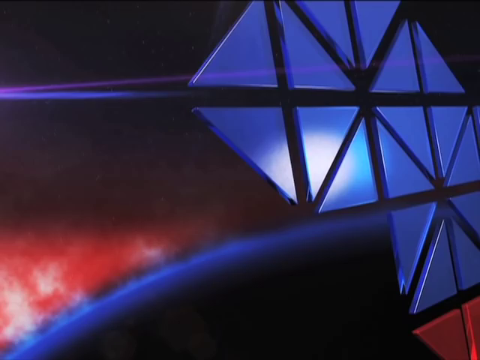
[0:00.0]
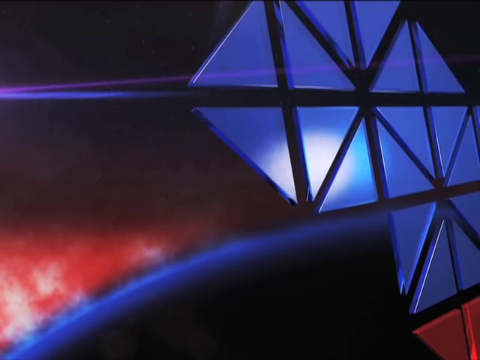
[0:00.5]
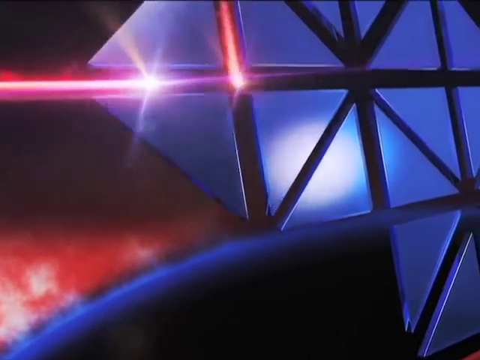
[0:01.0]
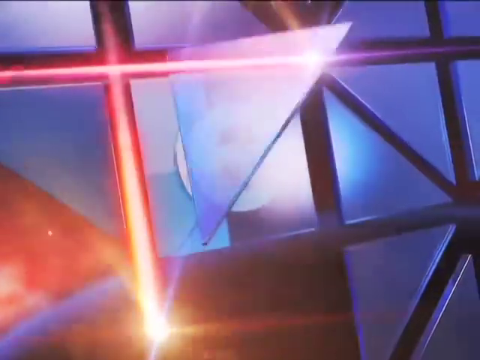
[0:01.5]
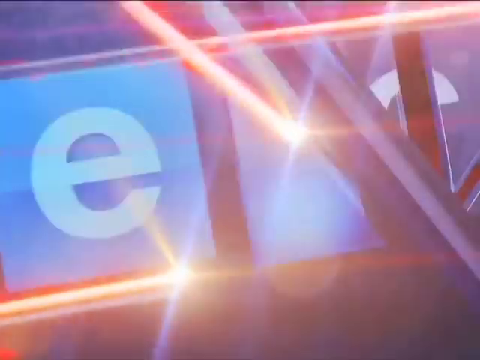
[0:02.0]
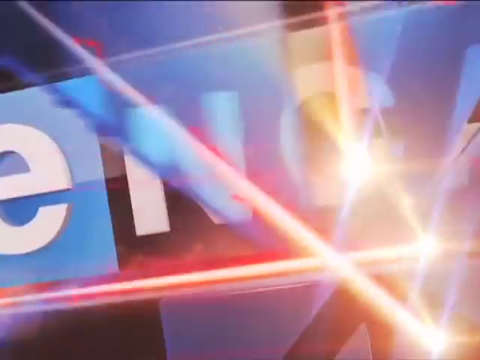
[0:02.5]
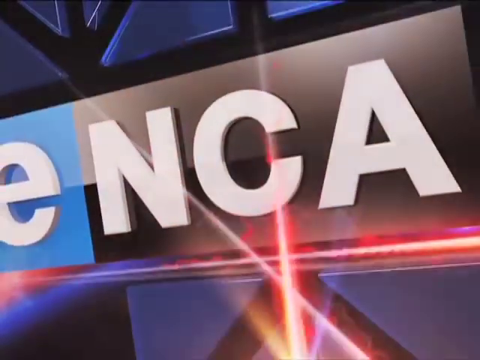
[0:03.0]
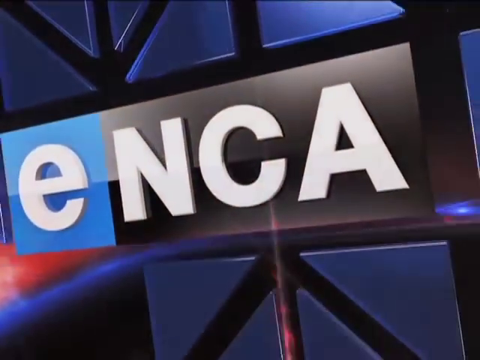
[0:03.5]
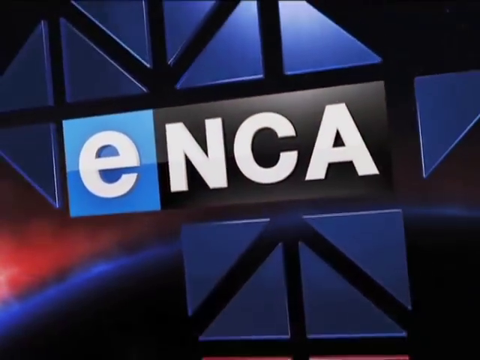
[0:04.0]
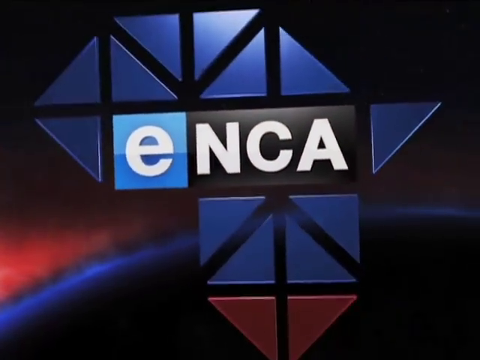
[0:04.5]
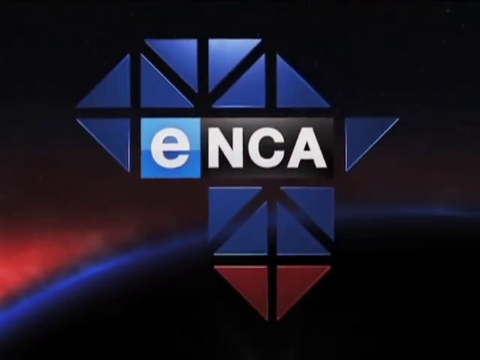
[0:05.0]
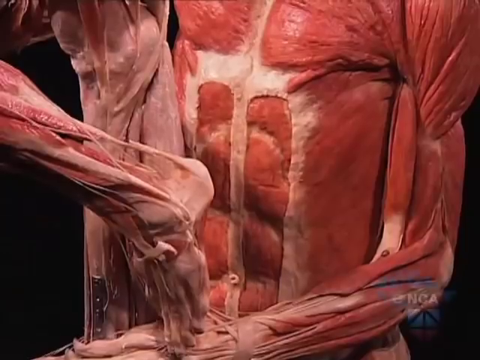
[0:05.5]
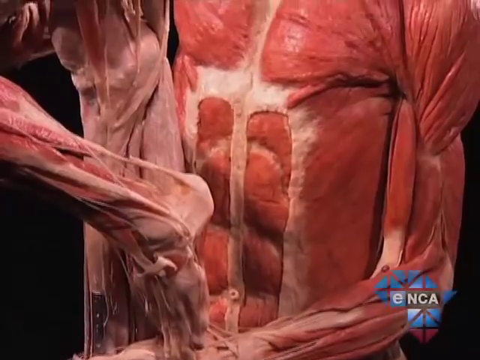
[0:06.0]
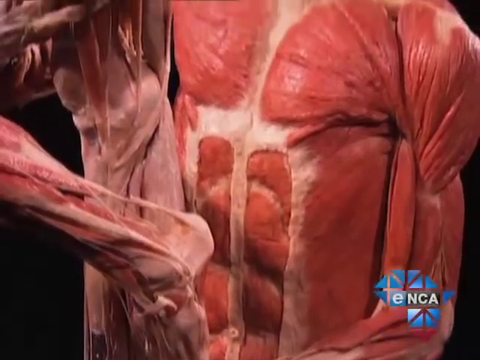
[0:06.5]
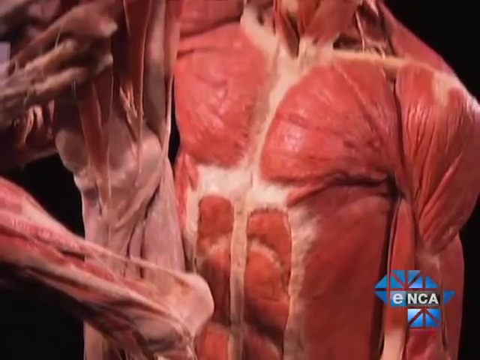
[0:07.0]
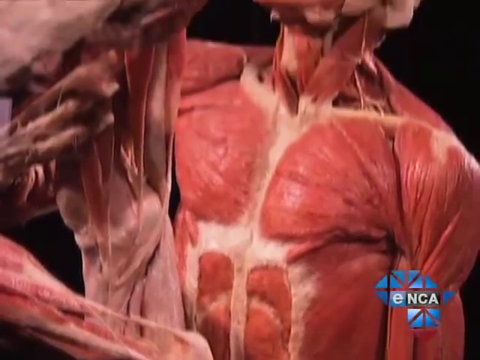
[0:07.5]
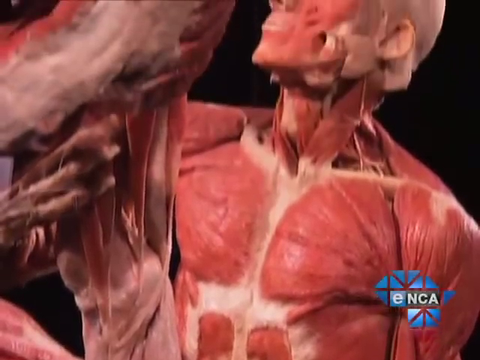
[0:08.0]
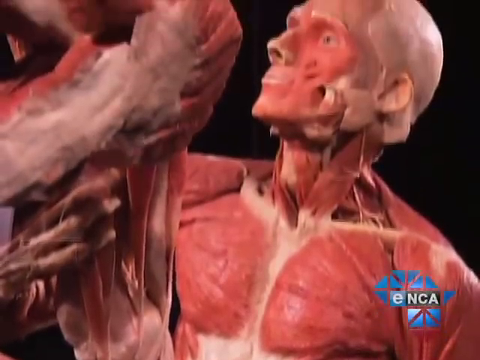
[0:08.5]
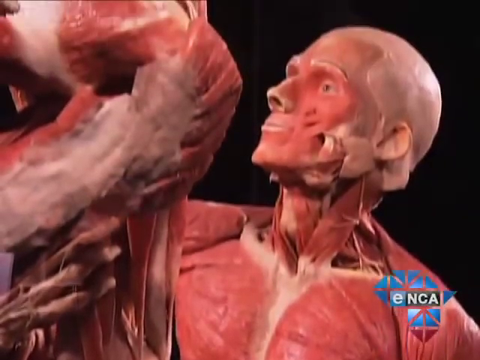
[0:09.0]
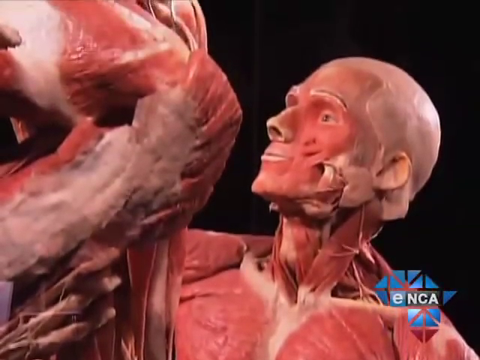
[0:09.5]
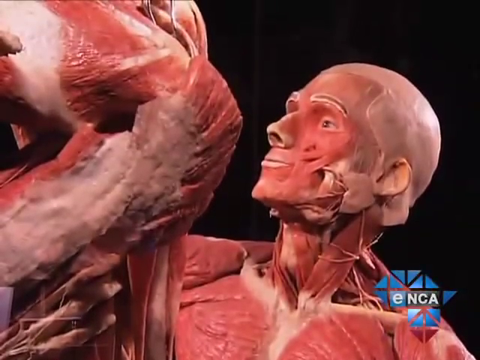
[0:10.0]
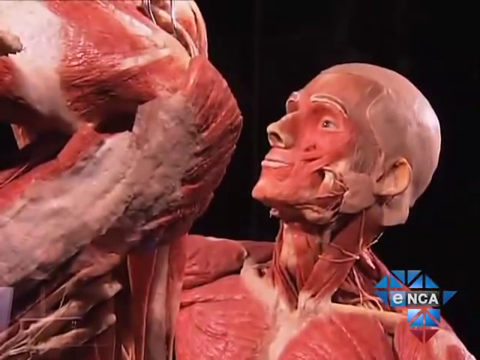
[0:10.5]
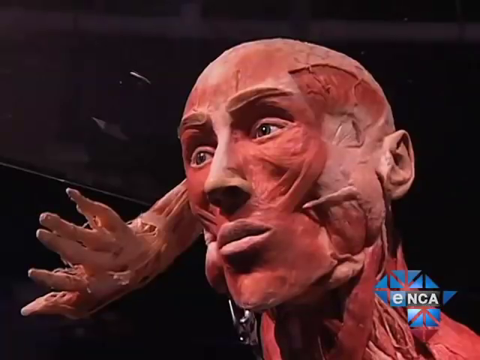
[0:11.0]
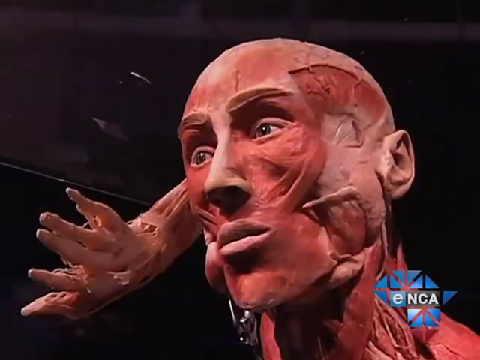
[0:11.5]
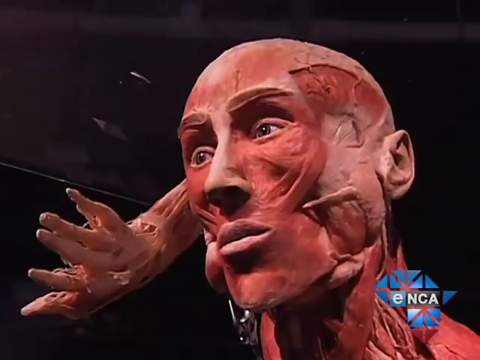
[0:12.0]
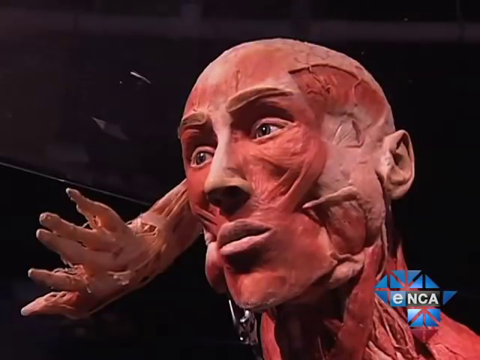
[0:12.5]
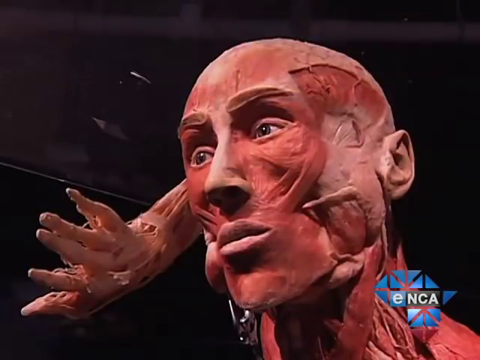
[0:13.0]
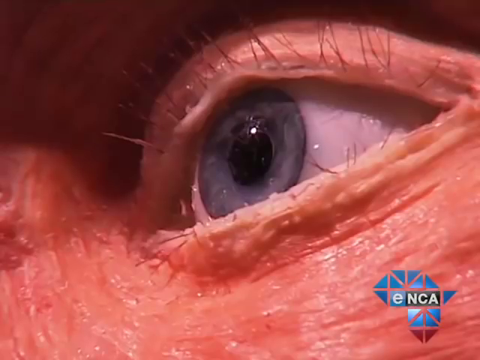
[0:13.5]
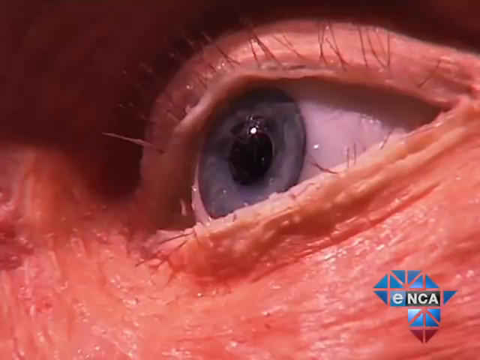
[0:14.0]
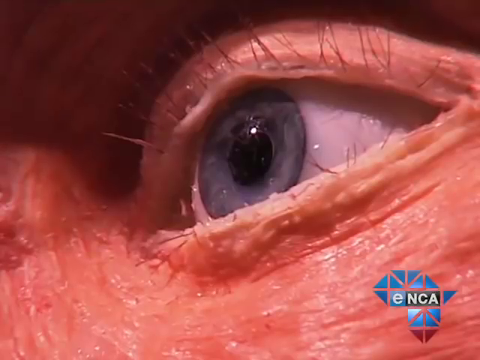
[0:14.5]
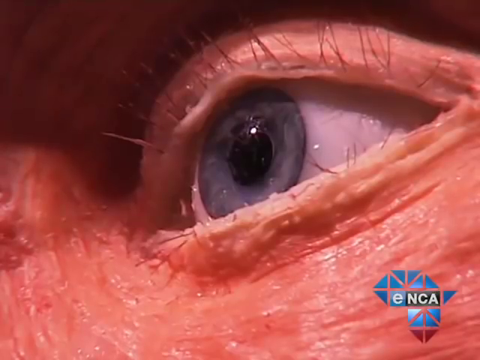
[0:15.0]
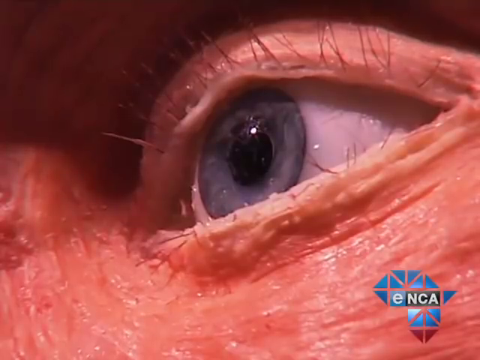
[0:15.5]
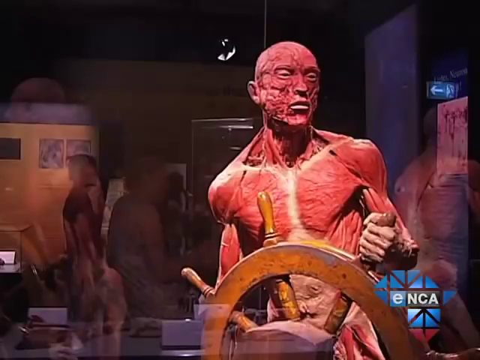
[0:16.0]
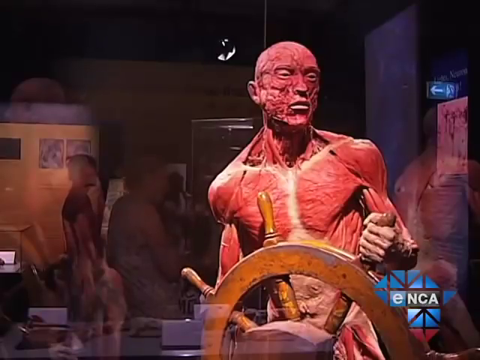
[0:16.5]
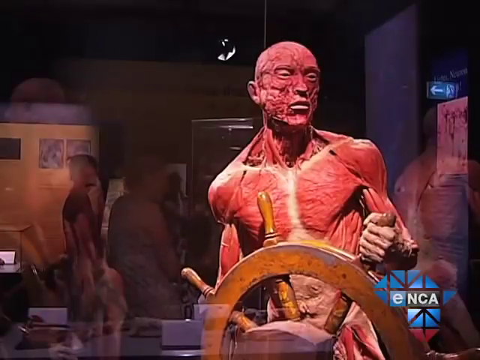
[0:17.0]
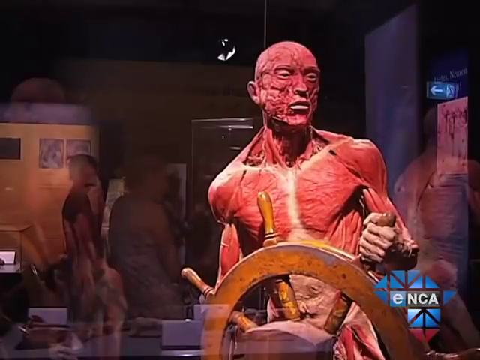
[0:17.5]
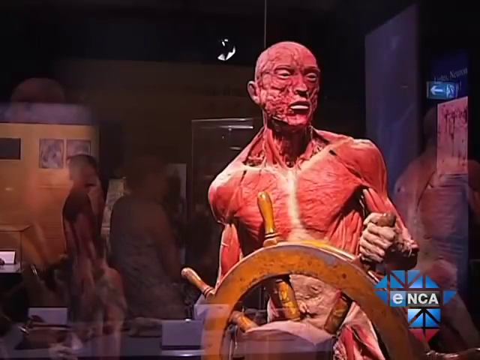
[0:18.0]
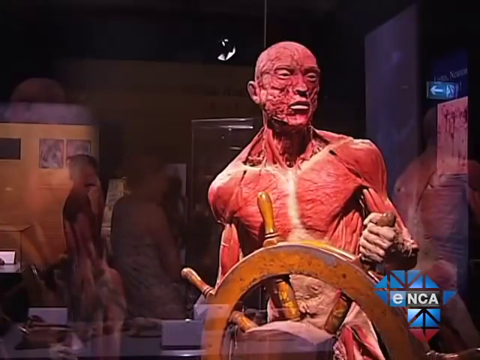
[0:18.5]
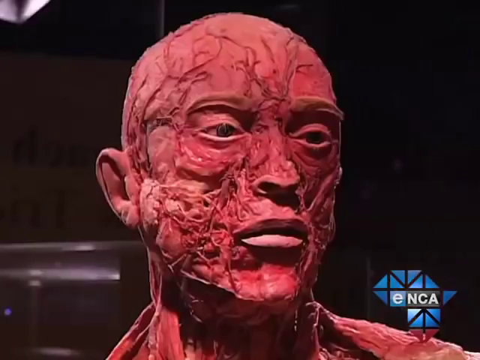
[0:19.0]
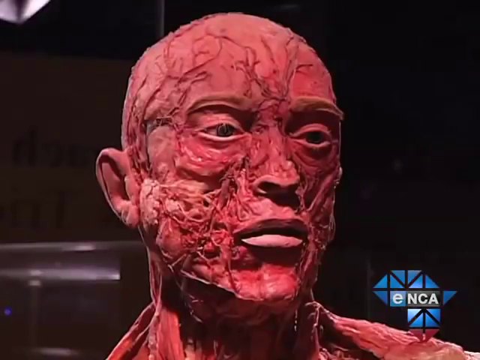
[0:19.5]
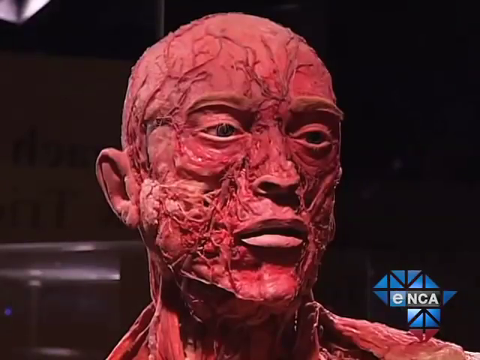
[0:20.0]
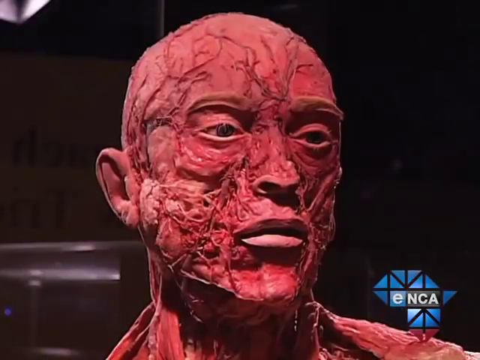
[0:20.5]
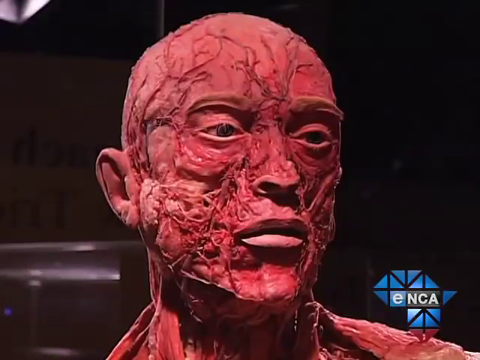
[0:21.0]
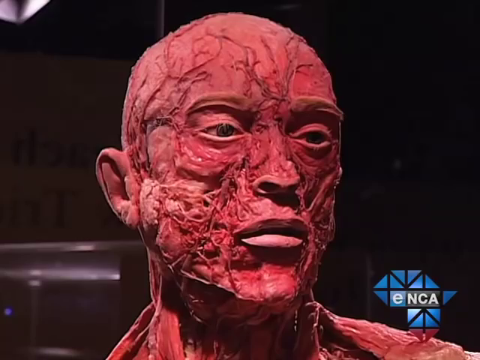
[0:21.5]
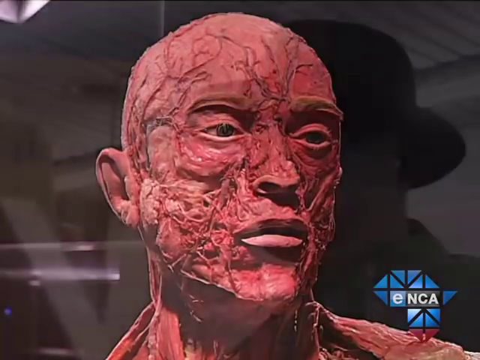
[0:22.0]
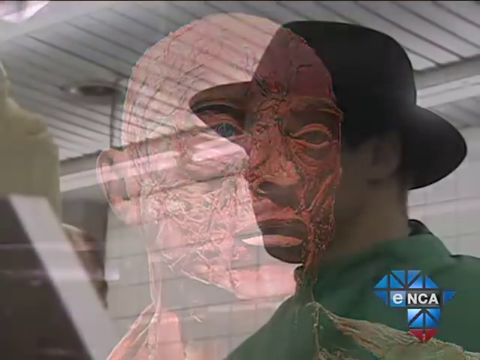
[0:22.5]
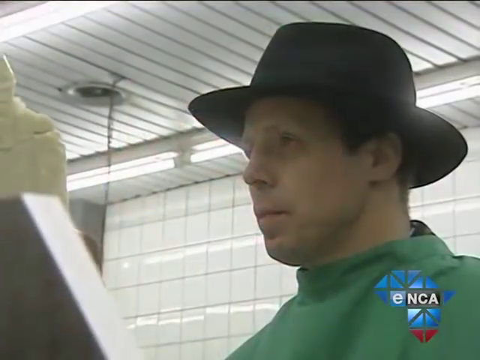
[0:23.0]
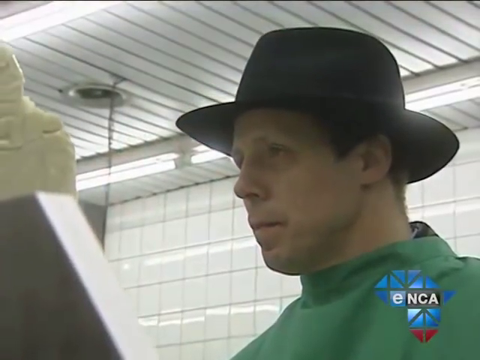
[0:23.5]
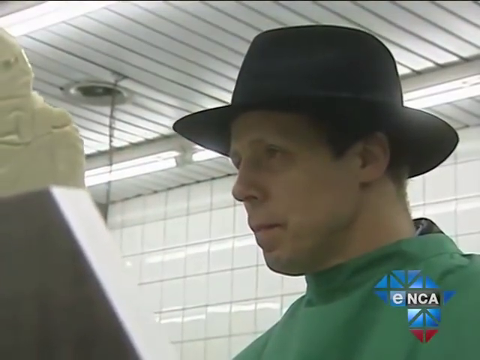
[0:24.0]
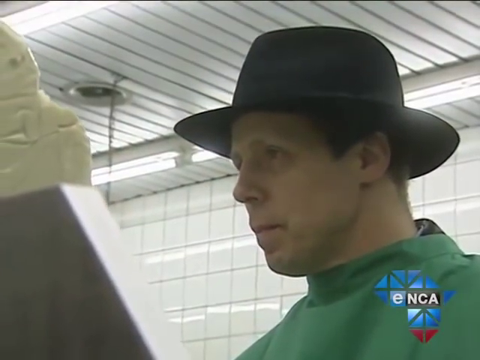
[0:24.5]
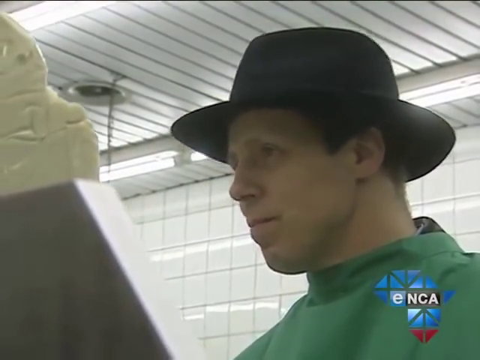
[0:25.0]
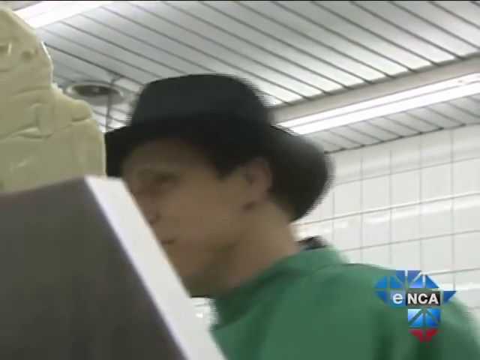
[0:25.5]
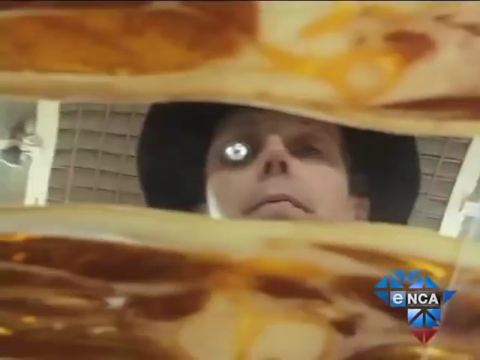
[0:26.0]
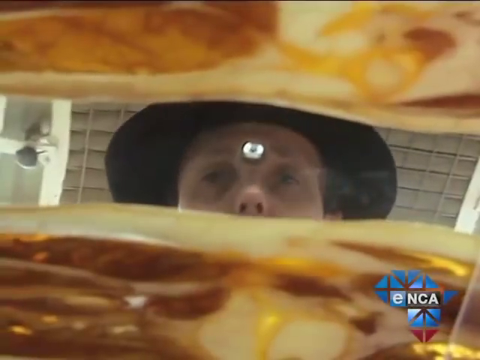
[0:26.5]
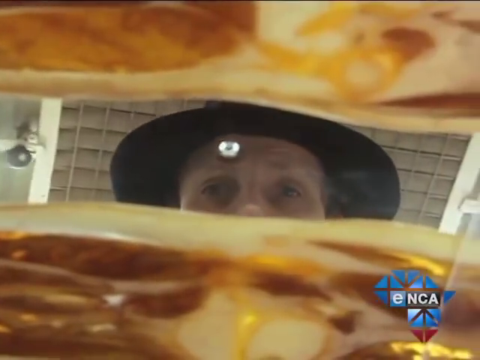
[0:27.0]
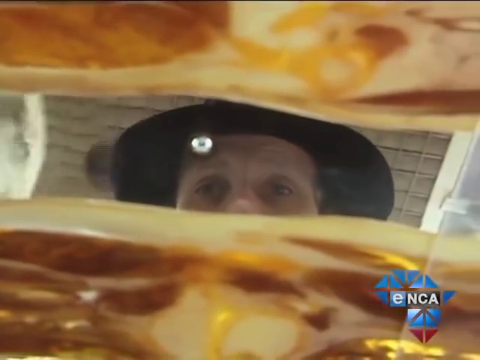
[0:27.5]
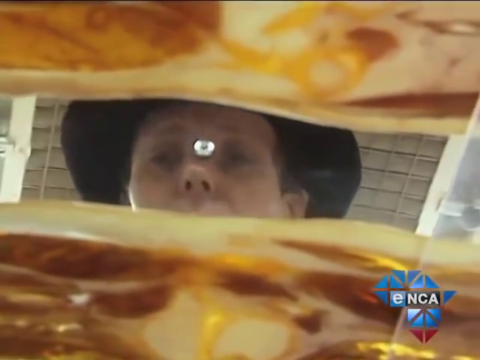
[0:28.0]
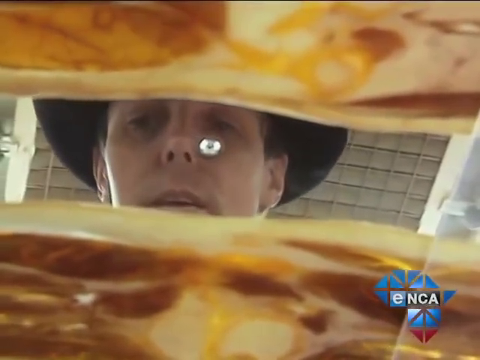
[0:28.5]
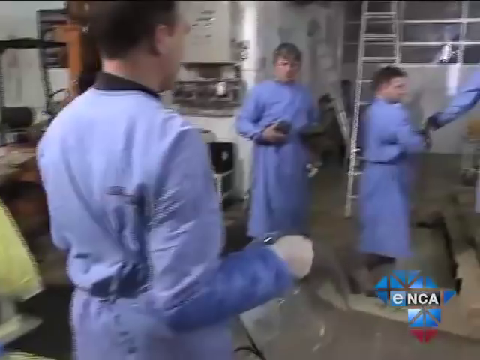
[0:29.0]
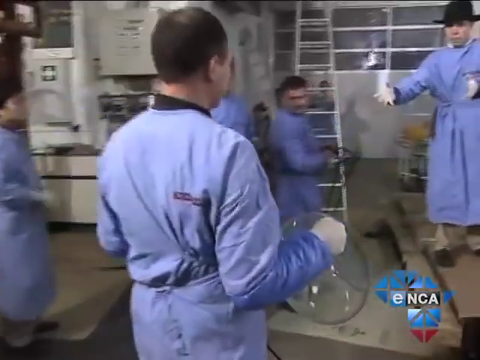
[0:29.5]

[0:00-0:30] Different shapes and colors hooked together appear, followed by "ENCA" in capital letters. The camera then seems to zoom in on anatomy figures of the human body, showing muscles and tendons and a blue eyeball. A man's figure shows all the veins and muscles on his face, and he holds something like a steering wheel for a pirate ship. The figures show the veins and breakdown of the facial structure, the abdominal and chest muscles, the face area, the hands, some eyeballs and other parts of the body. This looks like it could be a display in a scientific center or a place where the human body is studied.